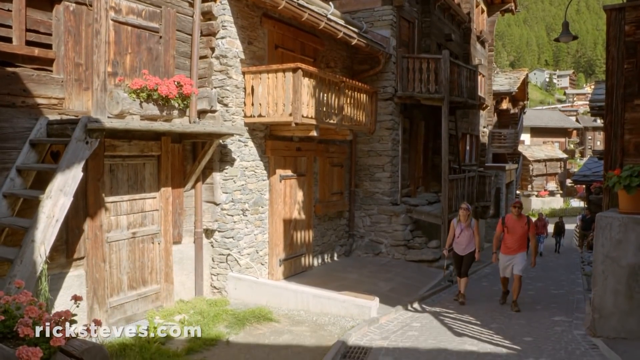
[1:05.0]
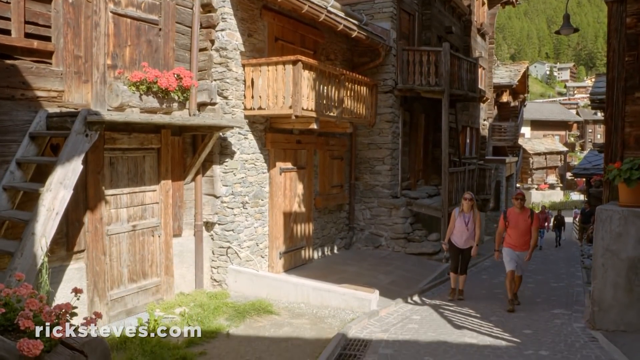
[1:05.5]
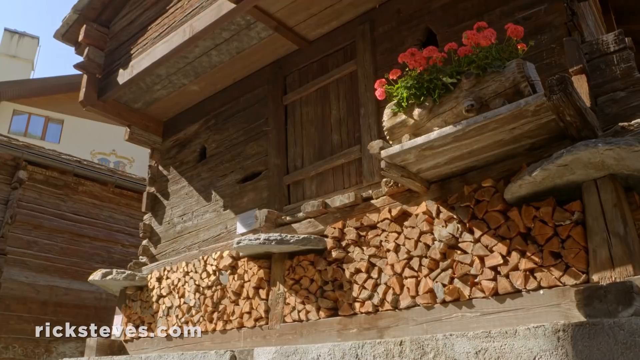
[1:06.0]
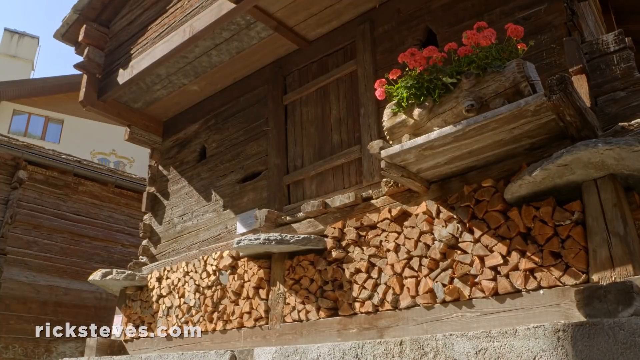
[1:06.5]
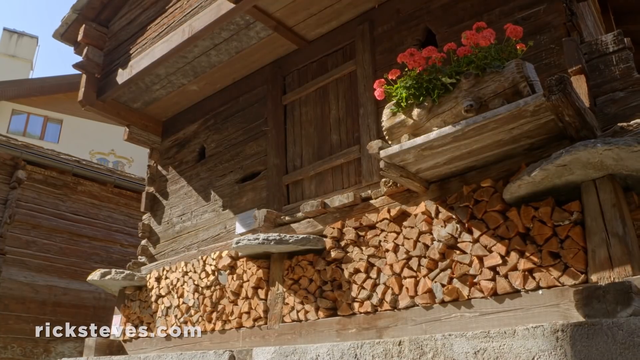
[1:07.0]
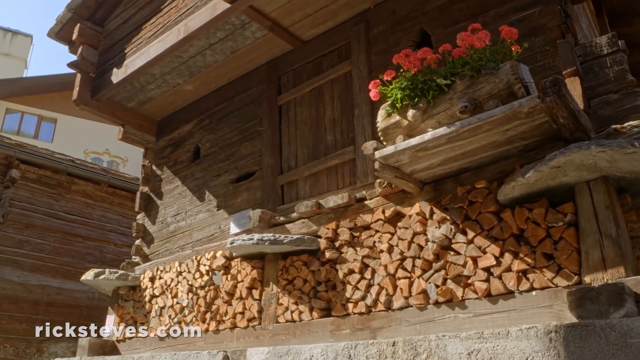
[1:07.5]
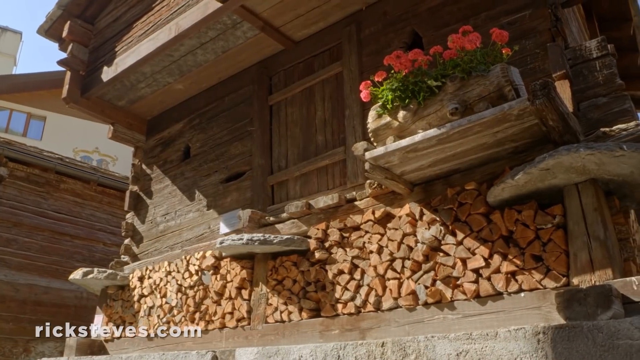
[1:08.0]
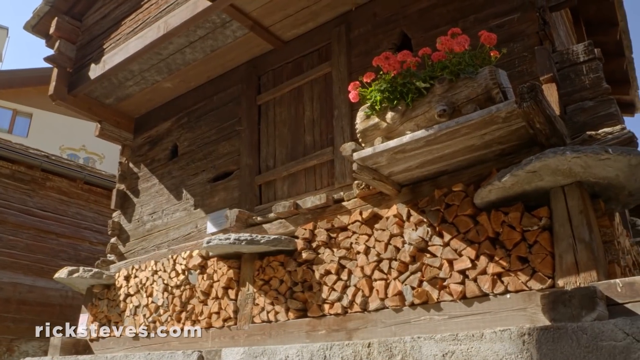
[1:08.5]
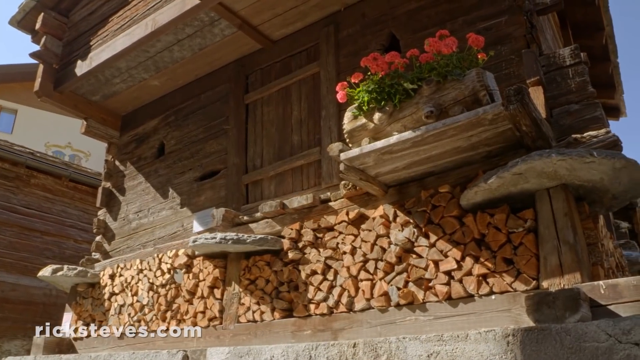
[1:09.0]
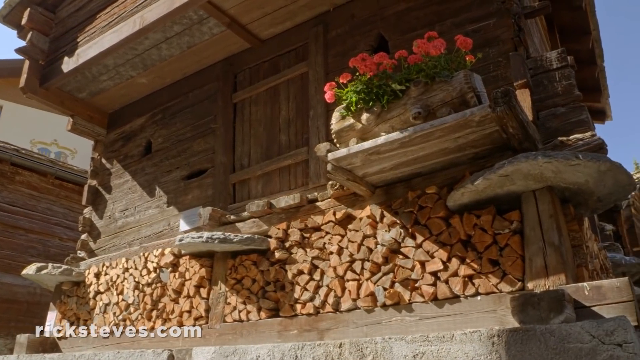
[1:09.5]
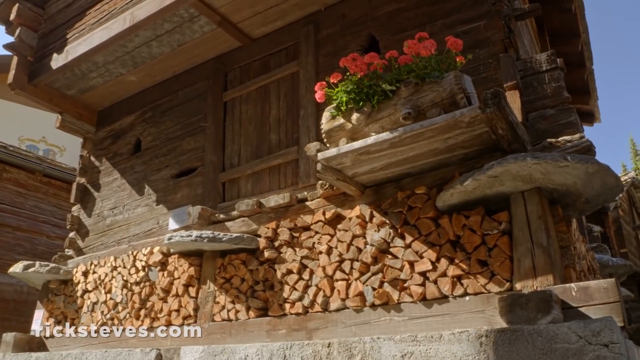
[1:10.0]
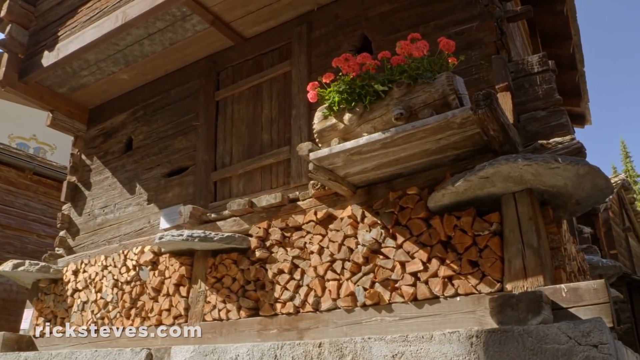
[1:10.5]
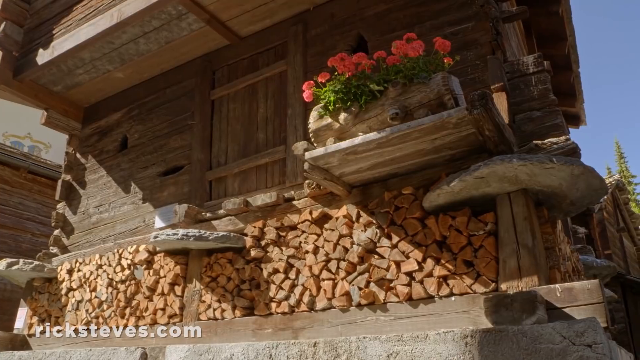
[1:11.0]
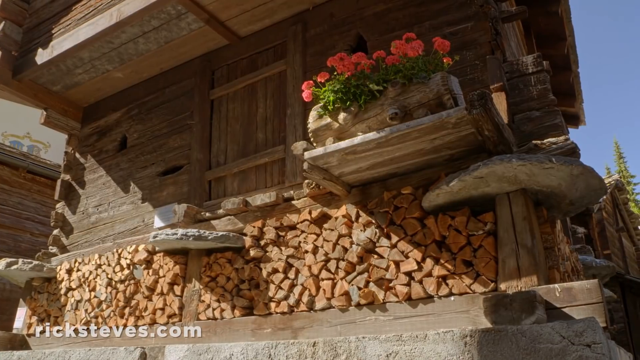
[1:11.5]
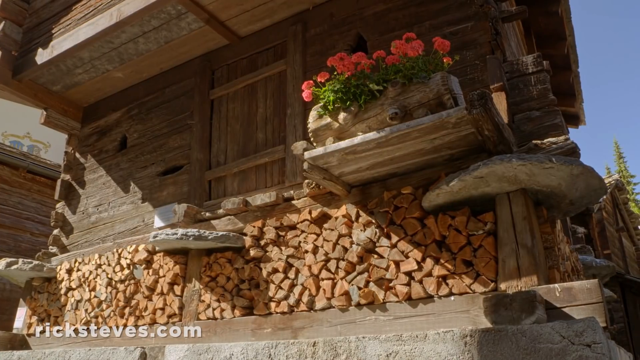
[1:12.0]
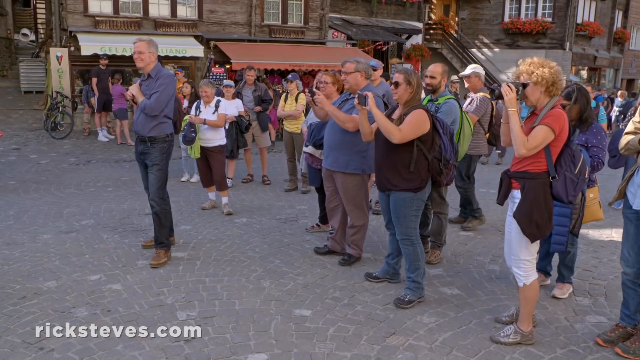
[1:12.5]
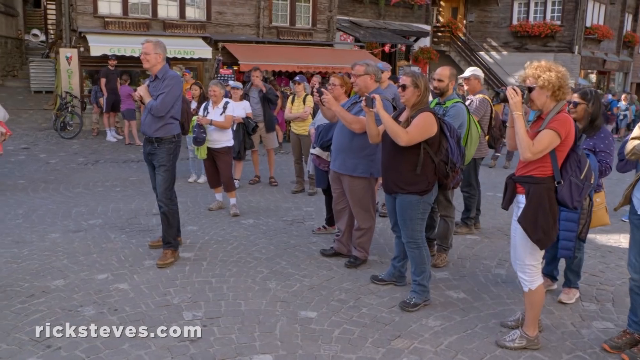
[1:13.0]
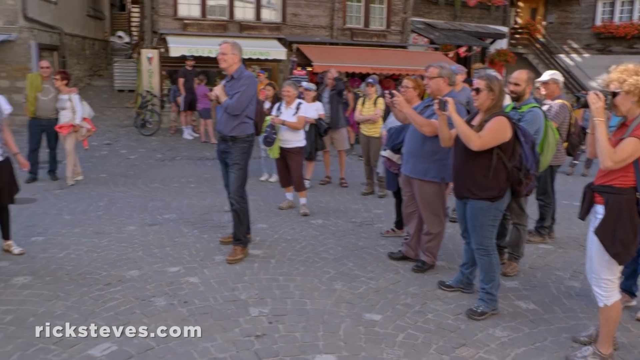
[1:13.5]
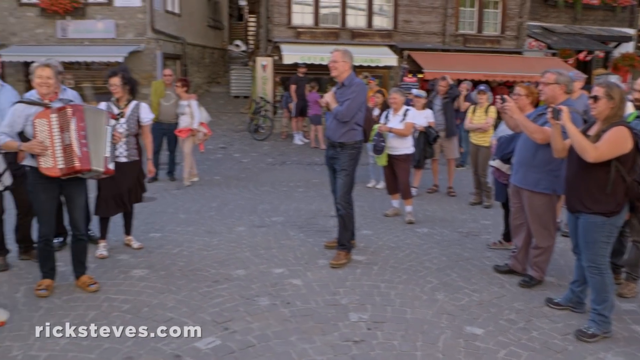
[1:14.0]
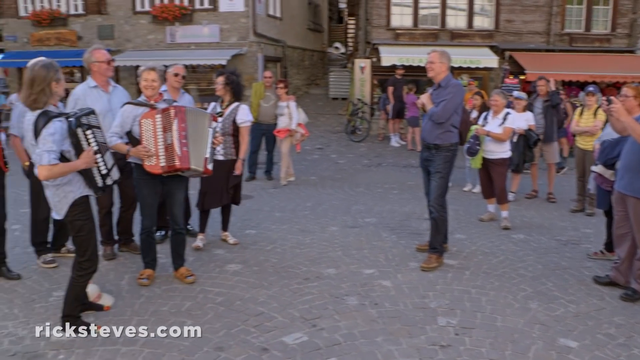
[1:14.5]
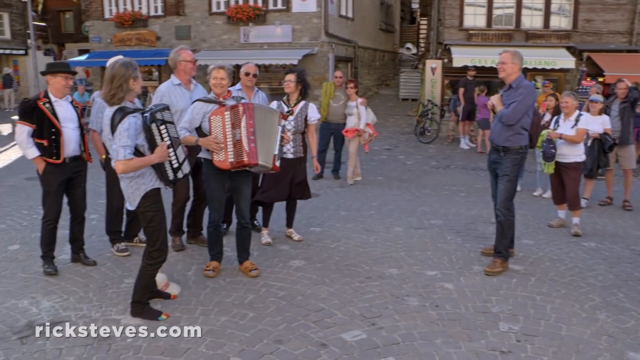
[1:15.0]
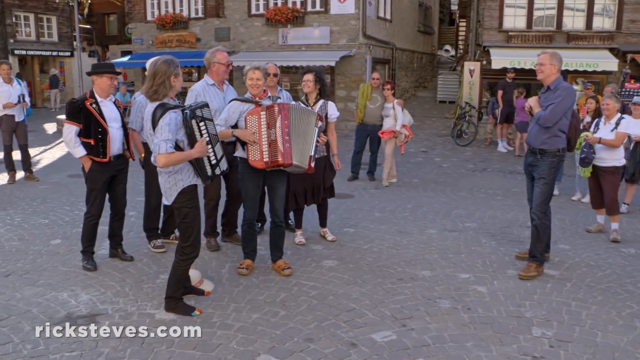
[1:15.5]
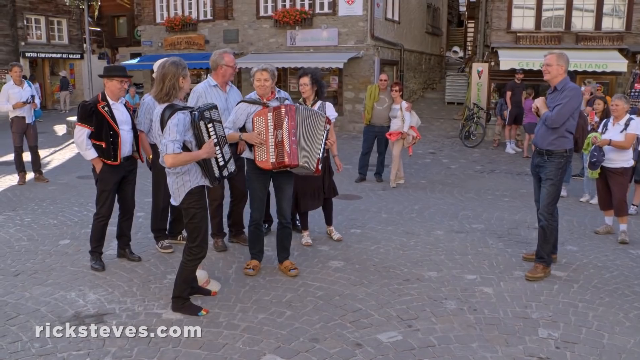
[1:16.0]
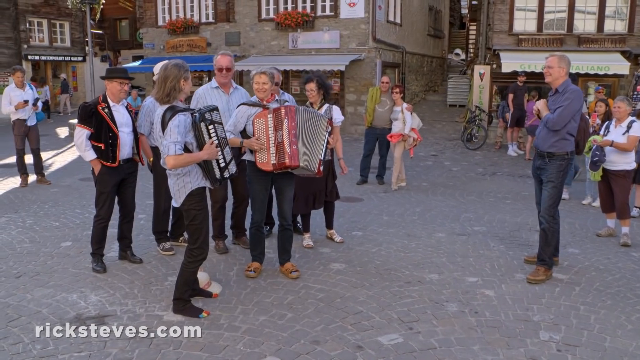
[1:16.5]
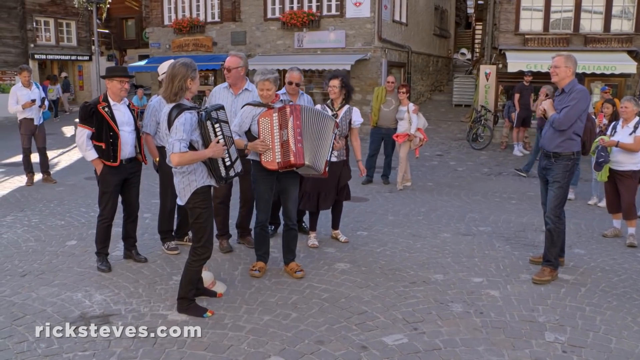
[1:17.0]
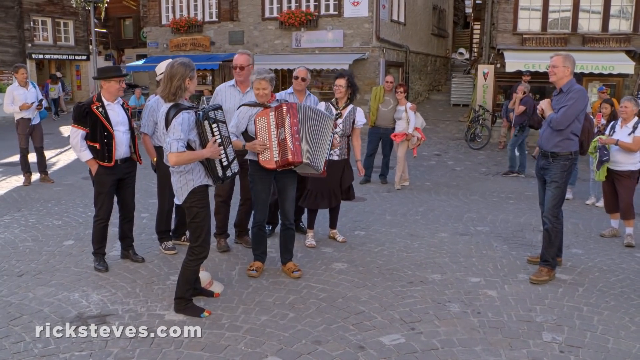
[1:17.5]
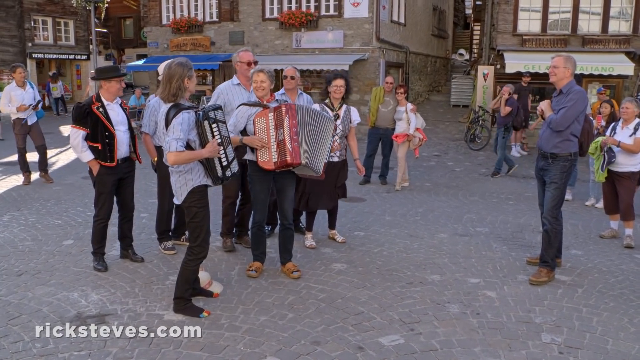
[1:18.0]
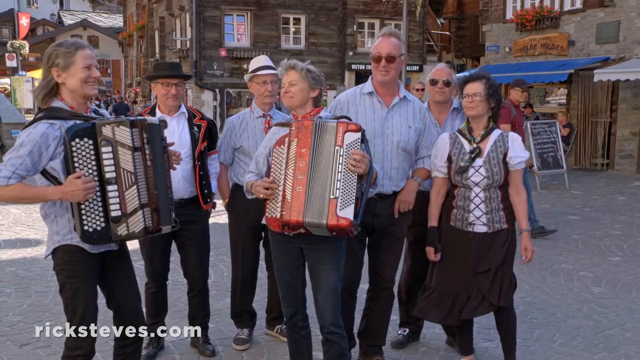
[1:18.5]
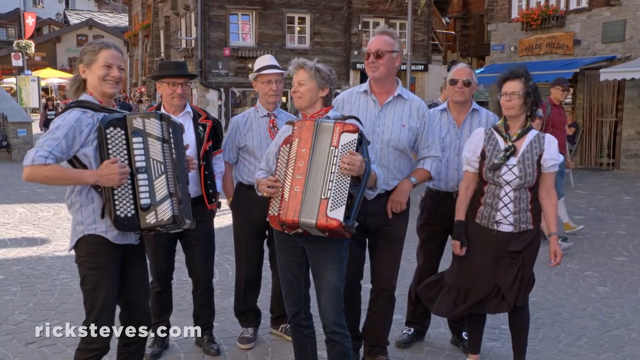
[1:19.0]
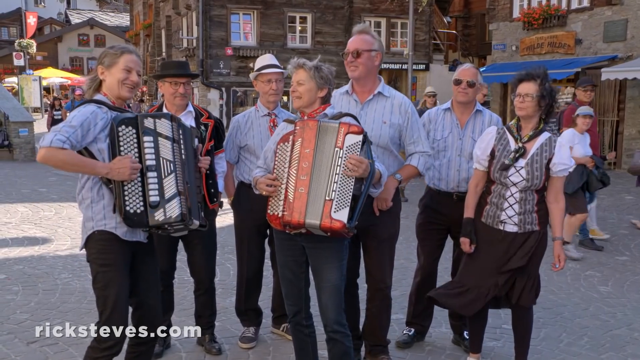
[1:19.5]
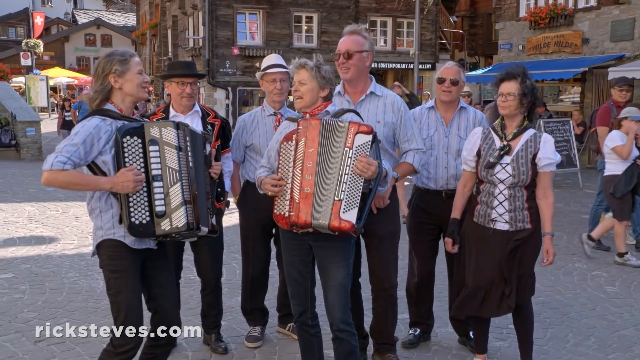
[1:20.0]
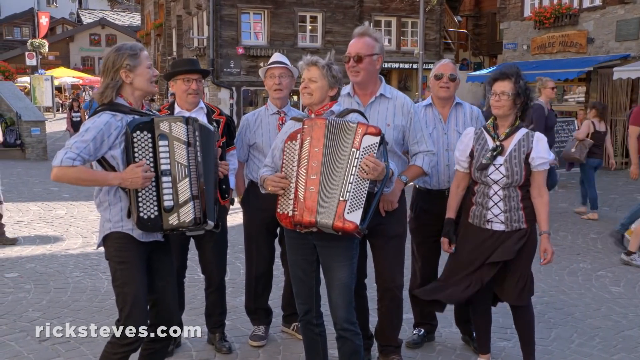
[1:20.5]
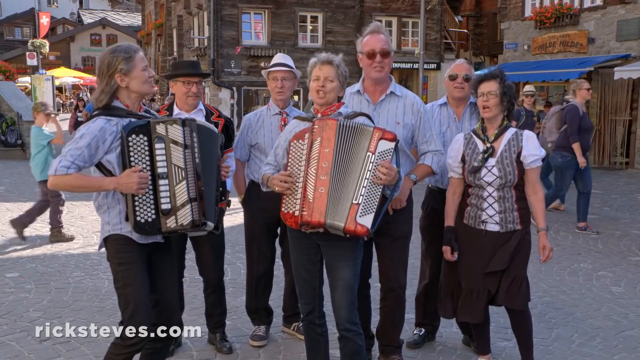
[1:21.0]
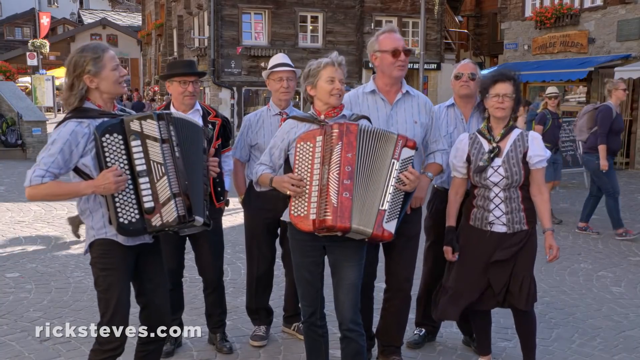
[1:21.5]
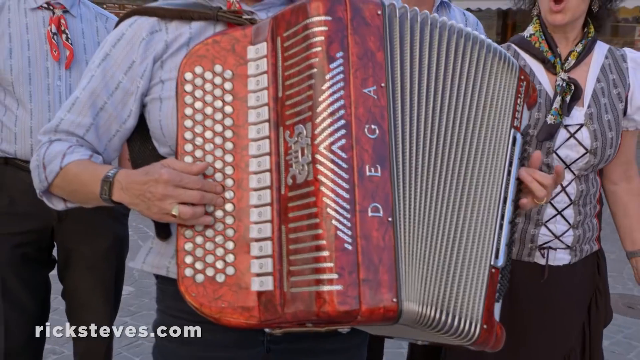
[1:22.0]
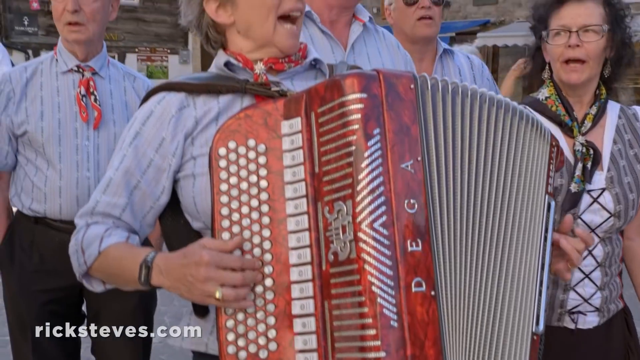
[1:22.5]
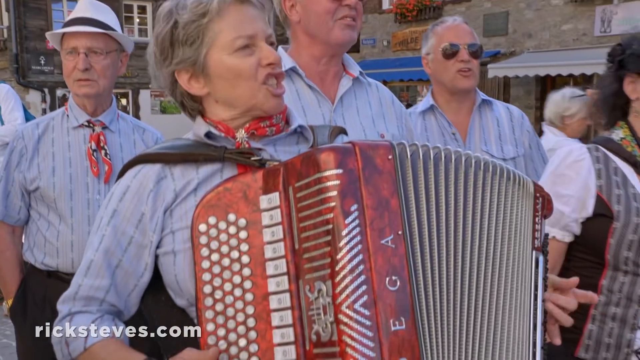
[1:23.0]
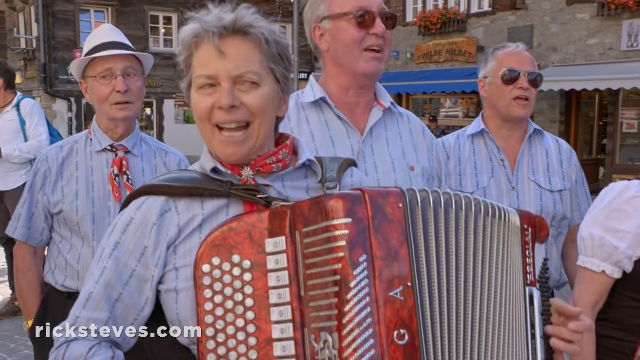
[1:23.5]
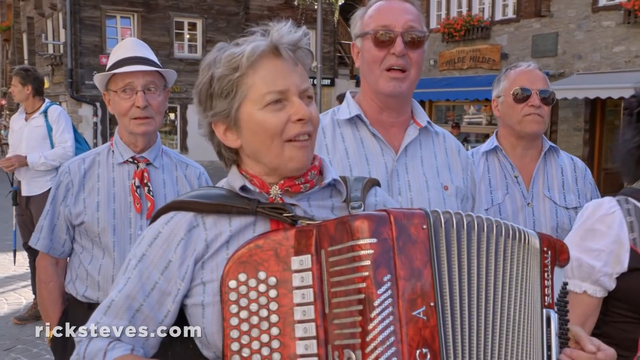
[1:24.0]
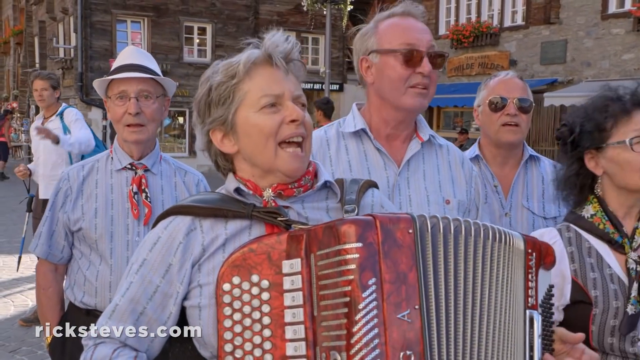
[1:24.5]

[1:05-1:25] The video is about Zermatt, Switzerland, finding charm in the Swiss Alps. Tourists walk past an old wood building with pink flowers planted on a balcony, and what looks to be firewood stacked underneath in a covered area of the building. Then musicians play accordions: two women play accordions, with a group of people around them, possibly a band playing traditional music. A couple of tourists walk behind them, looking at them, and the group looks to be singing very loudly. People walk again past the wooden structures, possibly houses, whose whole bottom is filled with stacked firewood. The musicians are shown again playing accordions, with a big group of people watching them perform; the two women each have an accordion, and there are male singers in the back as well.